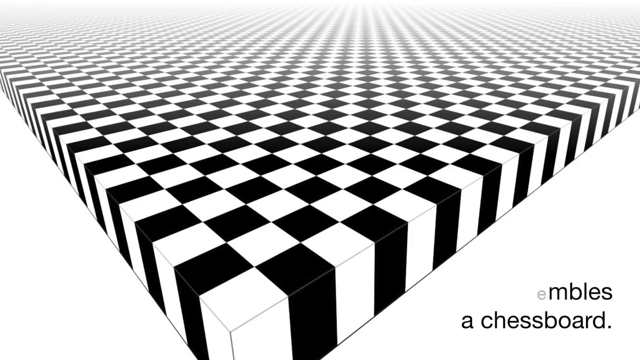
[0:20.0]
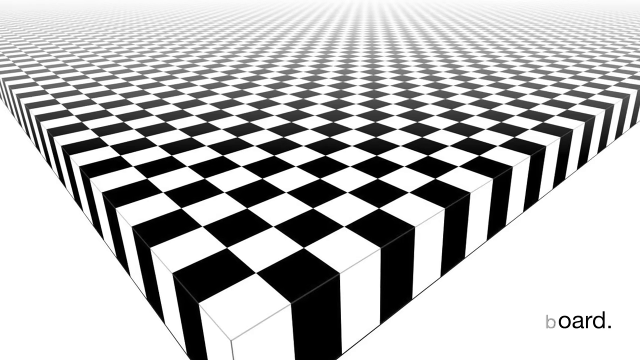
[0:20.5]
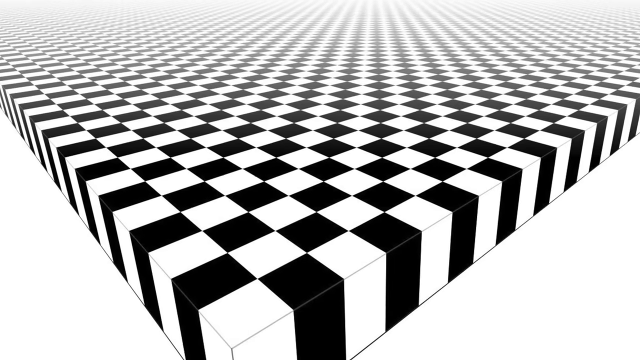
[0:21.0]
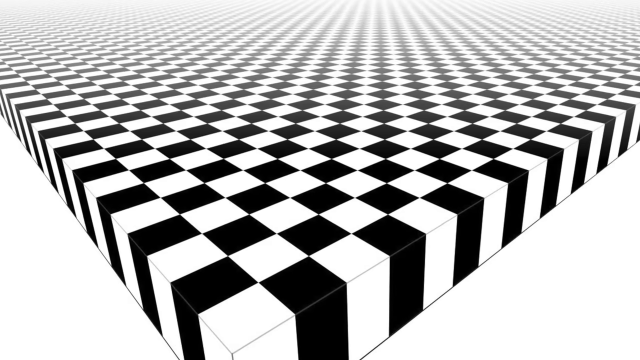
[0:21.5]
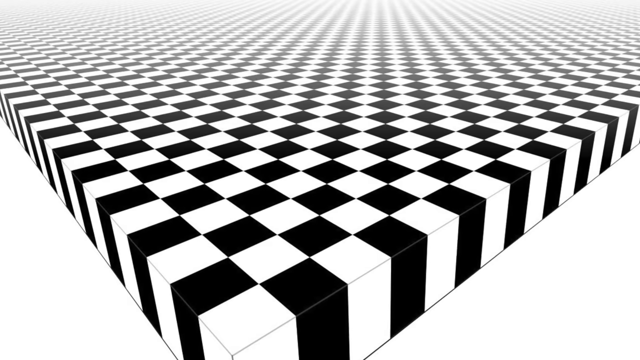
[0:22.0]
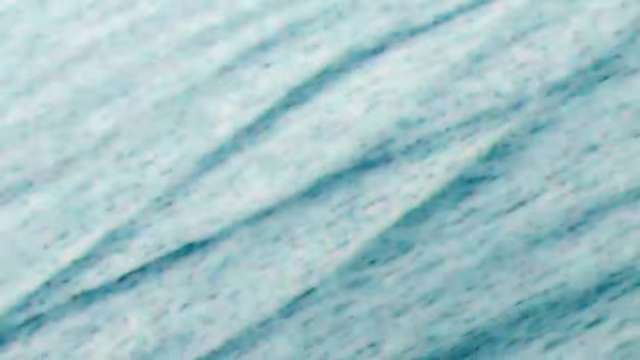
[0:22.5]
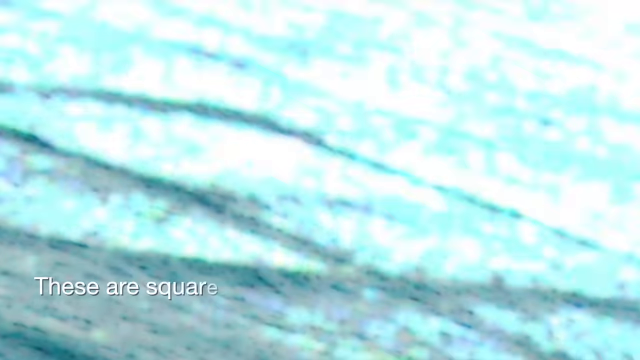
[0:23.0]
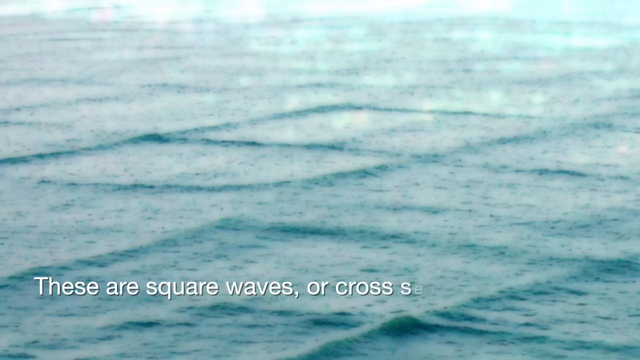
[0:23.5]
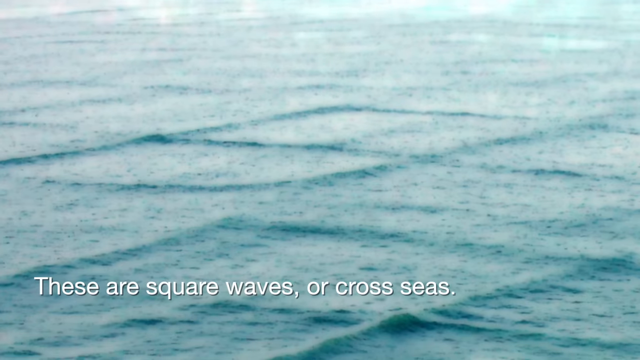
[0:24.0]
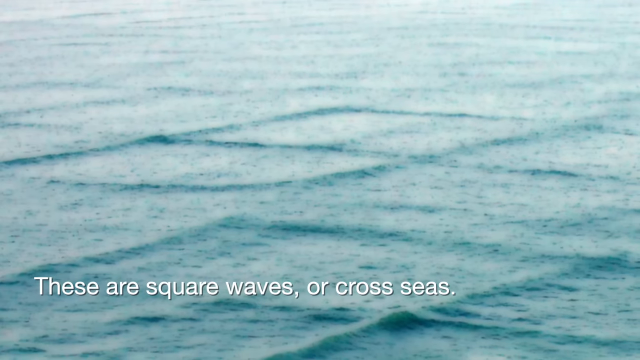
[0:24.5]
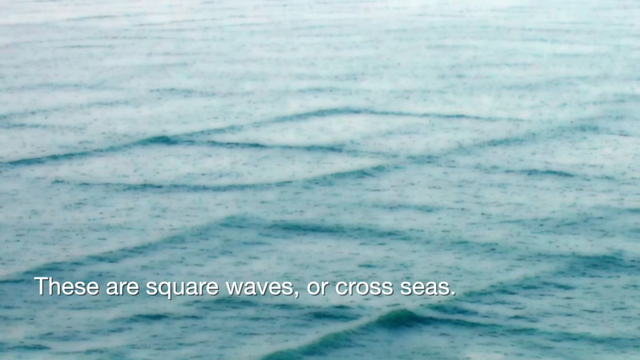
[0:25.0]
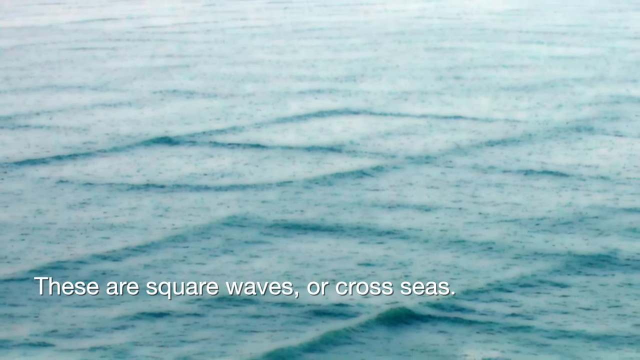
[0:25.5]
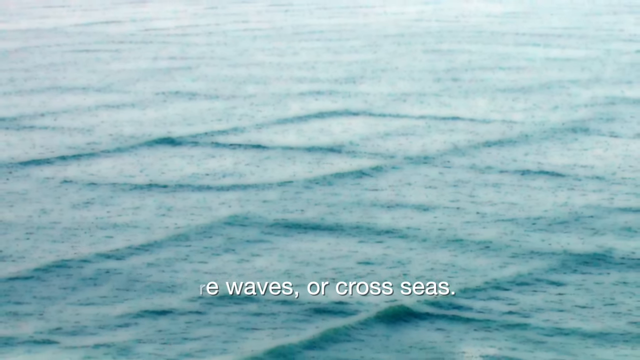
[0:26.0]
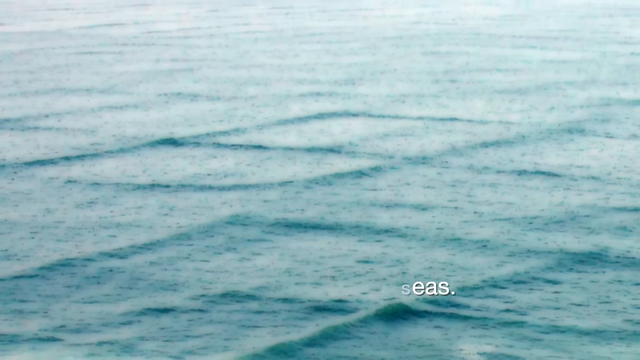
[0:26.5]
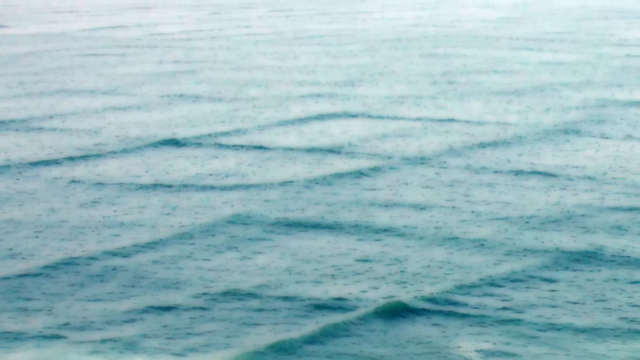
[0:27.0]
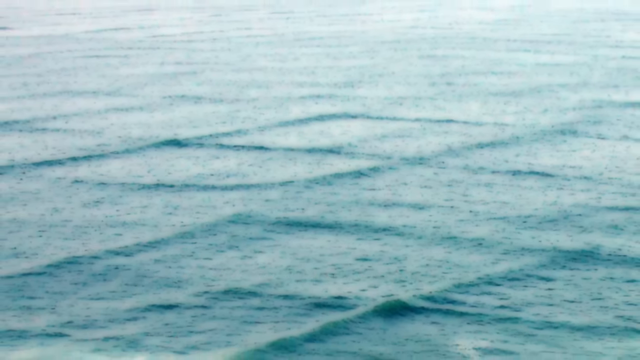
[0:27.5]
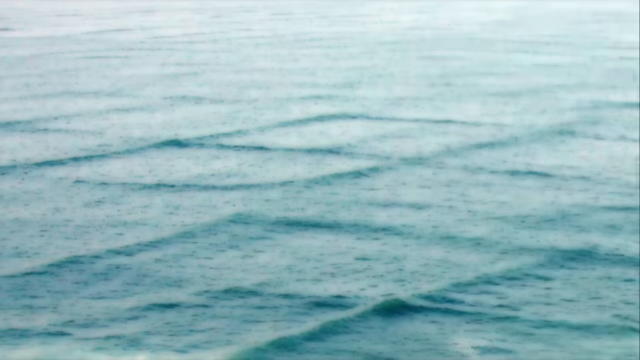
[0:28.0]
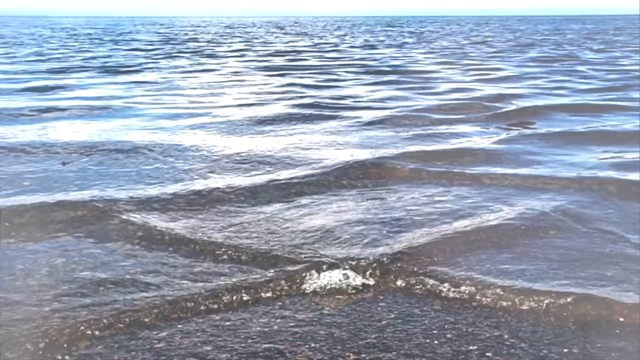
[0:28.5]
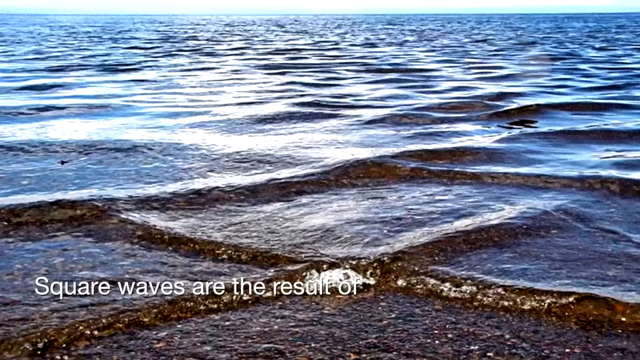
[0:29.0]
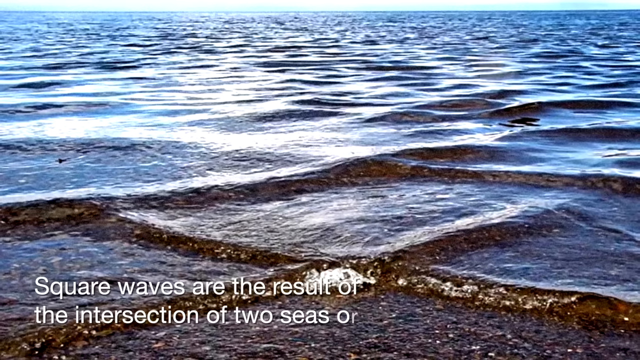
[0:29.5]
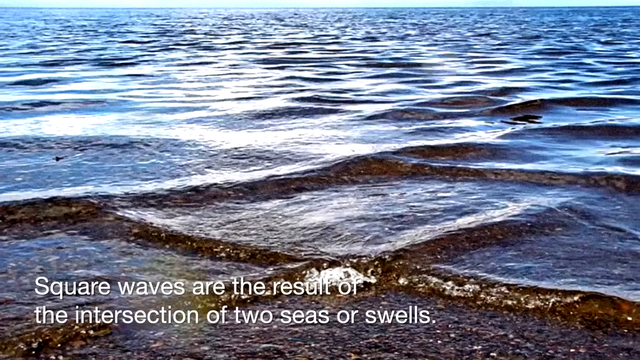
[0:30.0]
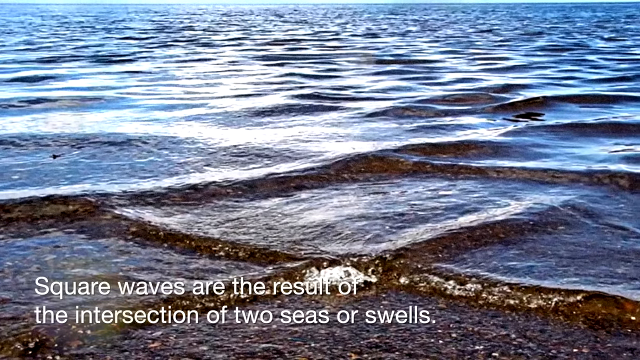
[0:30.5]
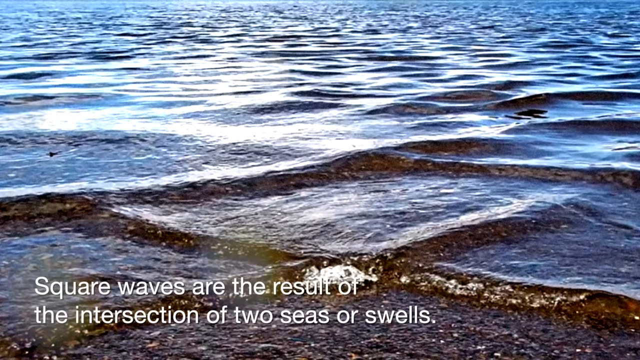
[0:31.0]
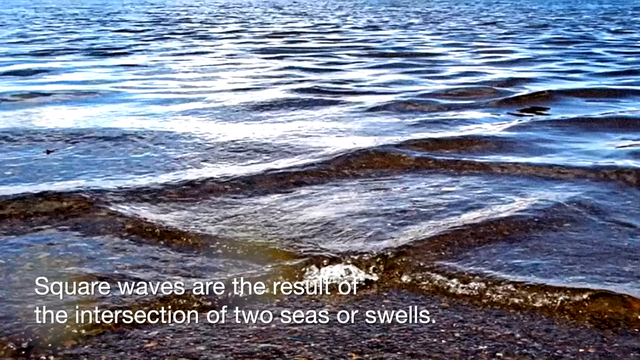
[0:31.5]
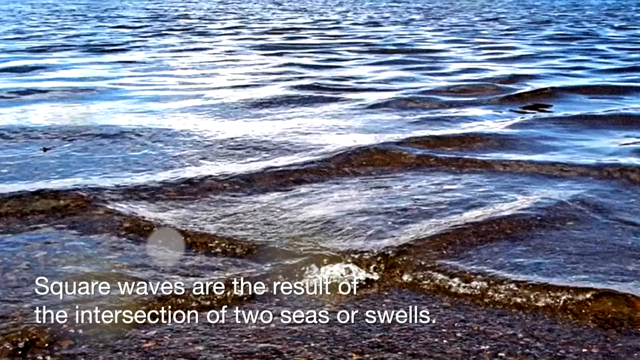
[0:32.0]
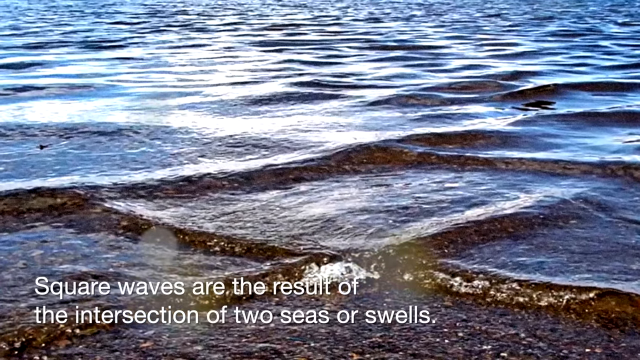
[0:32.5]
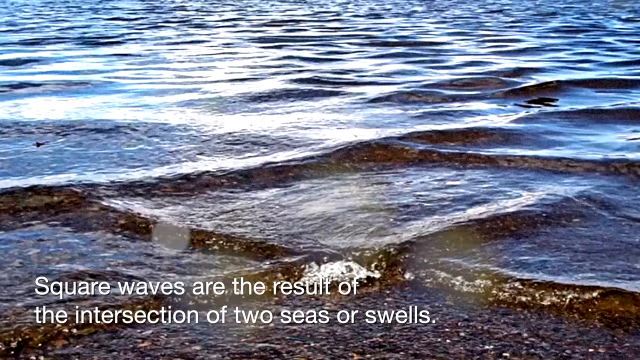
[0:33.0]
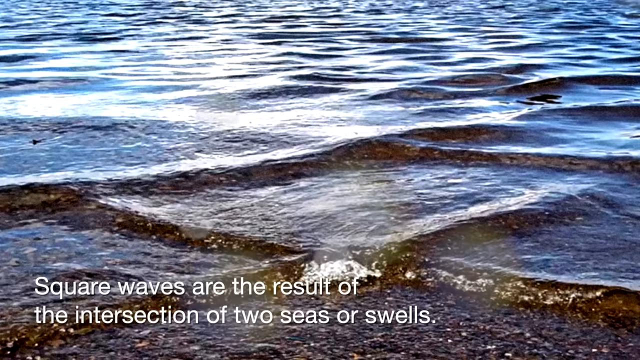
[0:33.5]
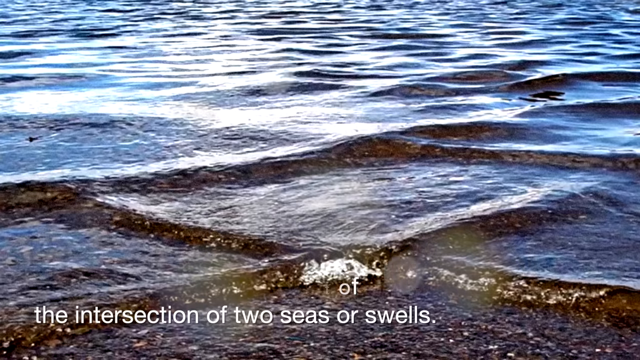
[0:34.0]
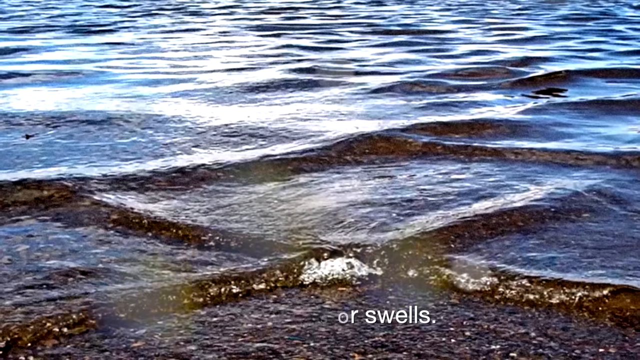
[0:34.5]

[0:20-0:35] An aerial view shows a body of water with waves that are square, still but square. A close-up of the same phenomenon follows, appearing to be a different body of water. It is daytime and very sunny, and the sun's rays reflect off the square waves. There are many waves, not violent ones, but the water is very wavy on top, and the view extends all the way out to the horizon, while the waves in the foreground are square. Text over the top explains the phenomenon of square waves. From the high aerial view the square waves are large, while those in the close-up are small.